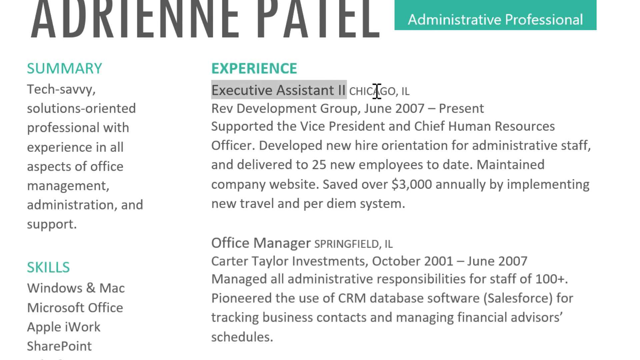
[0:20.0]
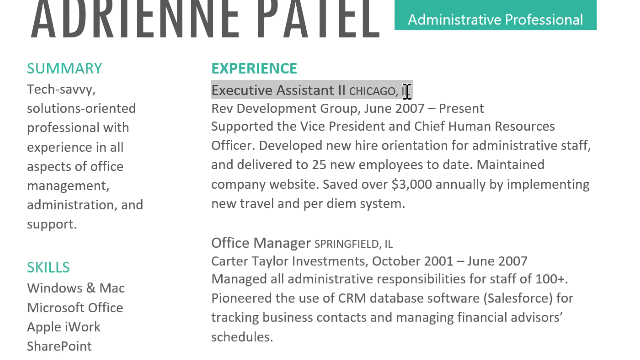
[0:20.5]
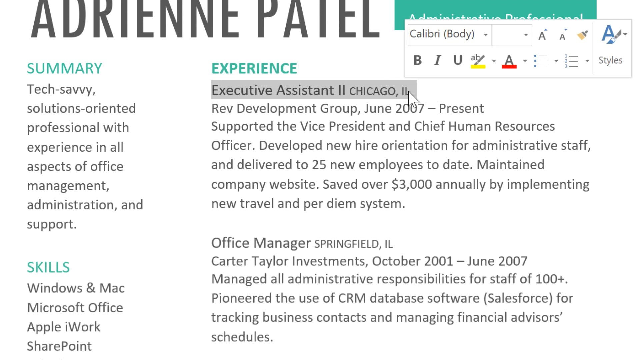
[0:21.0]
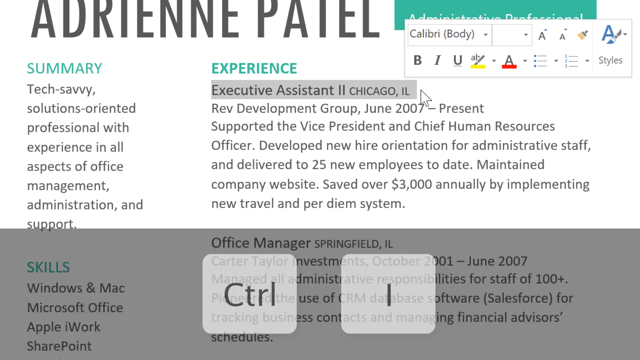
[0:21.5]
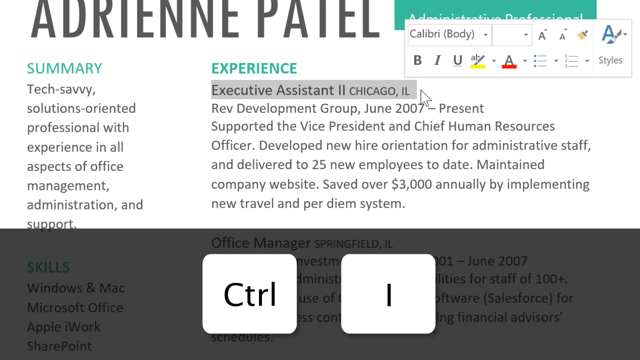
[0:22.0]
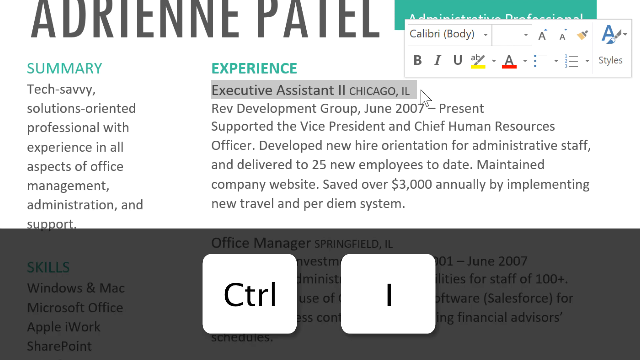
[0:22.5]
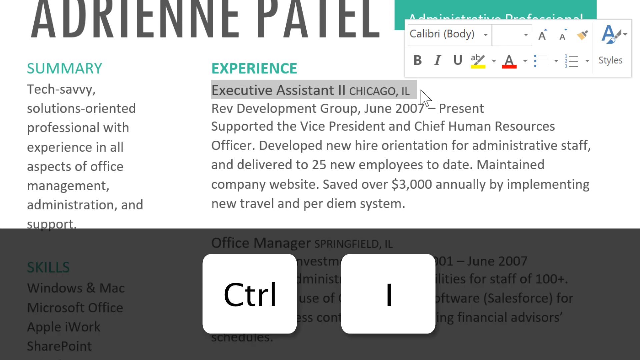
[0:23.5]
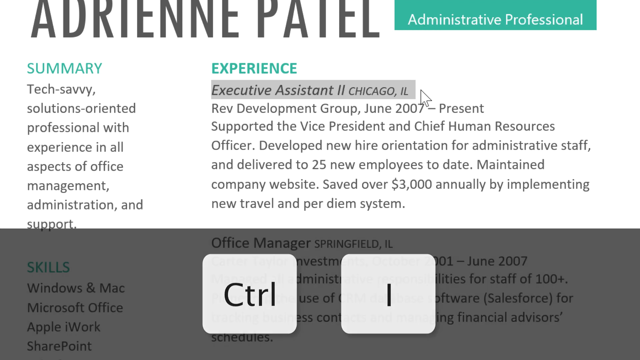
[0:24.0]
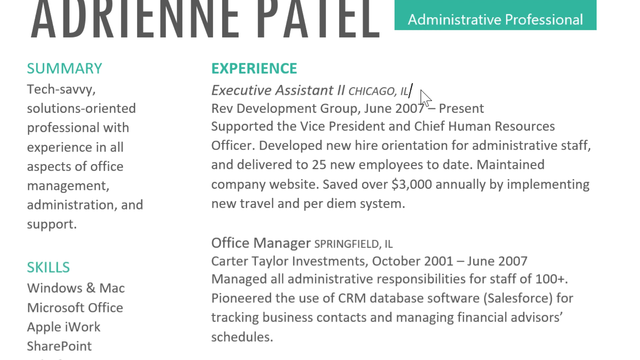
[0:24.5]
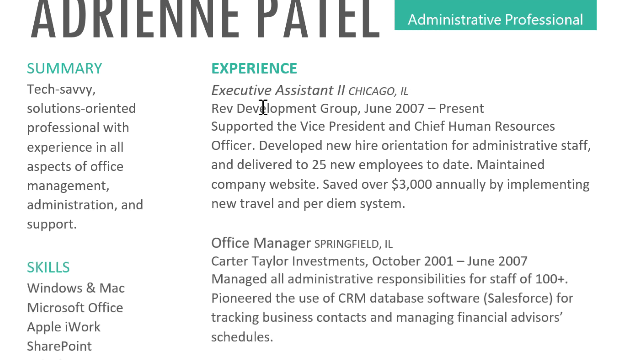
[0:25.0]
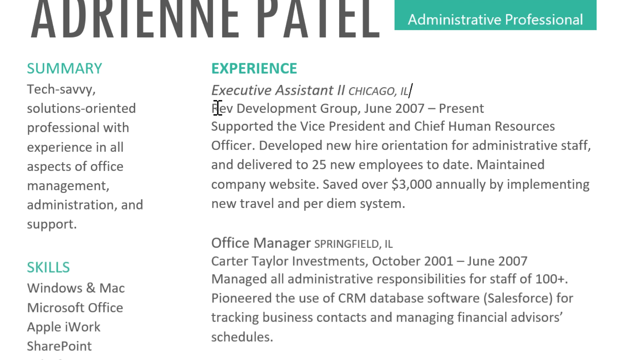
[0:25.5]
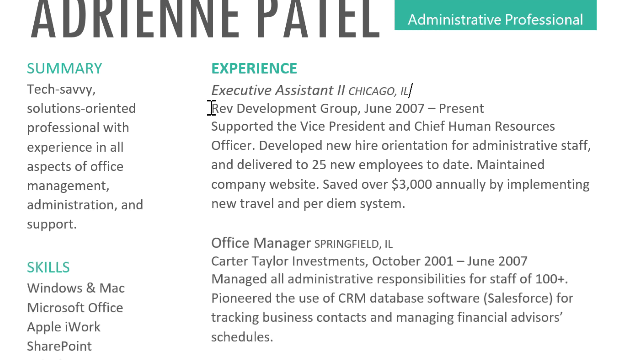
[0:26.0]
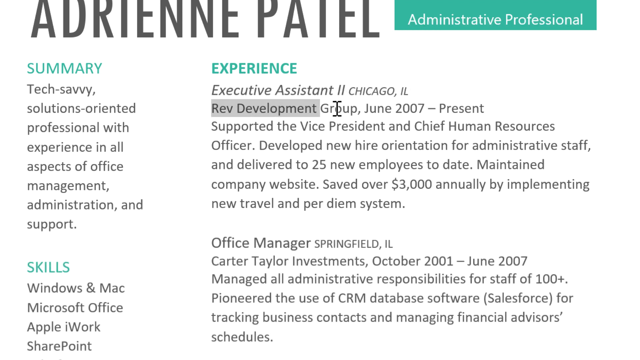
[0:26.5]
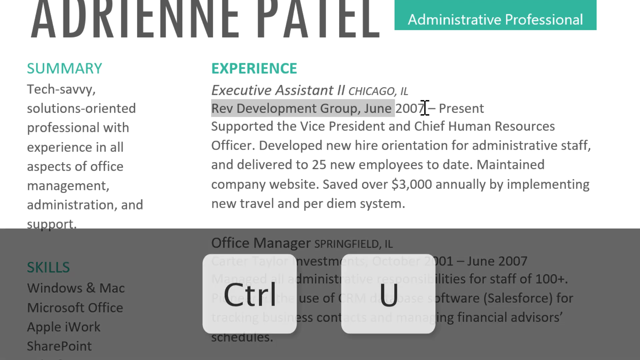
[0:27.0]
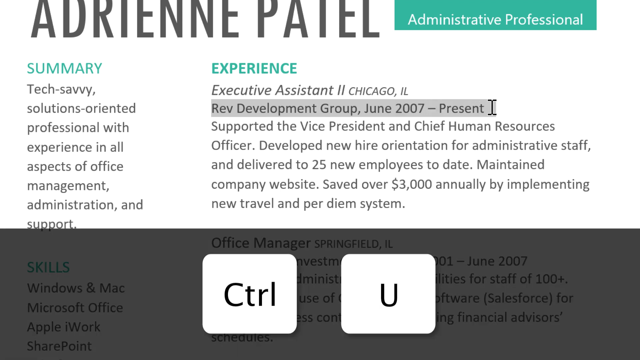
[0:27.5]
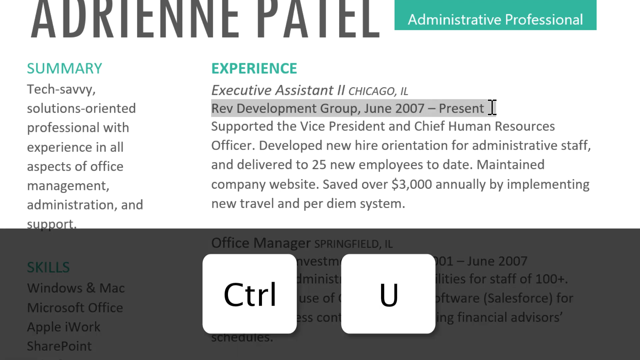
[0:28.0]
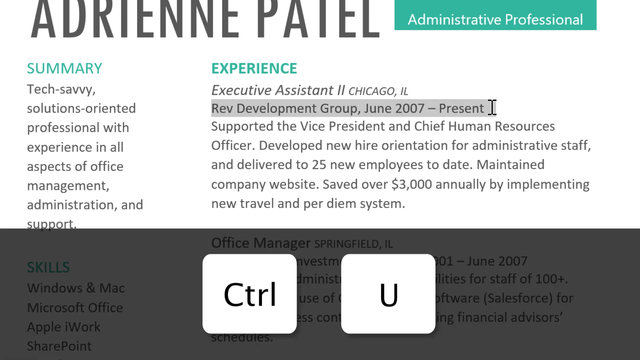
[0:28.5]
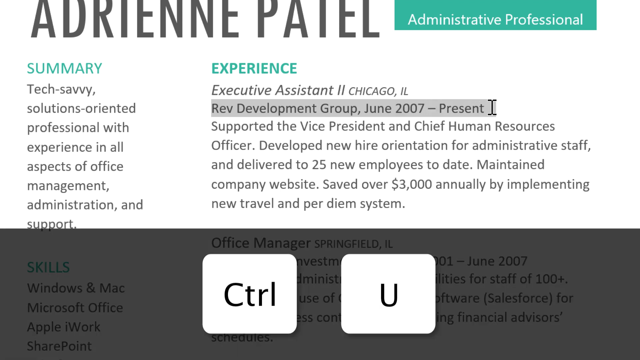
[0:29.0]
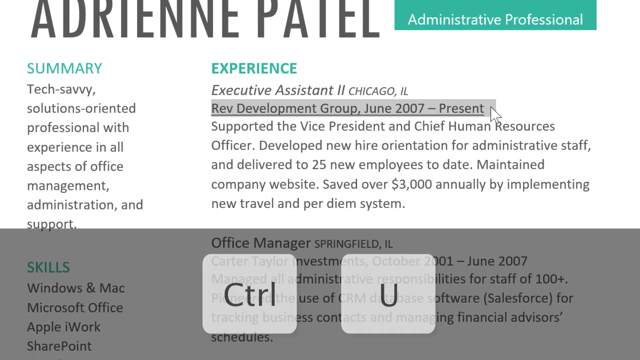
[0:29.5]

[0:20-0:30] Someone's CV is shown, with sections for profession, summary, experience and skills, along with qualifications. A mouse cursor highlights what seem to be the important points under the experience and the summary, continuing down to the skills.